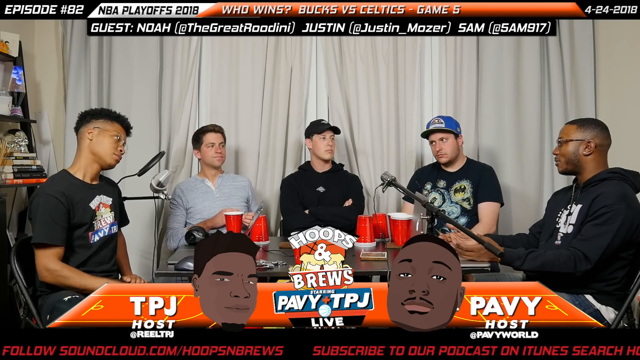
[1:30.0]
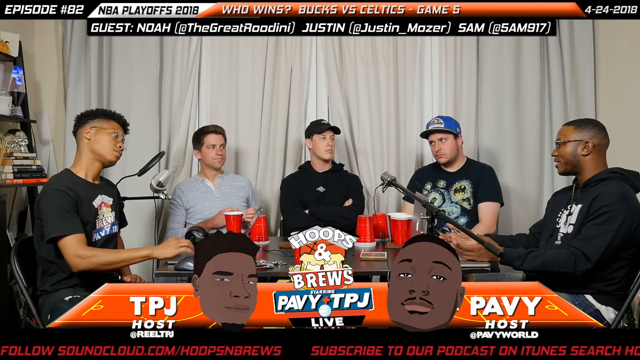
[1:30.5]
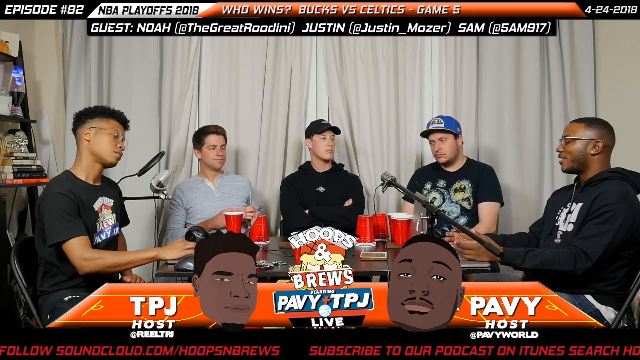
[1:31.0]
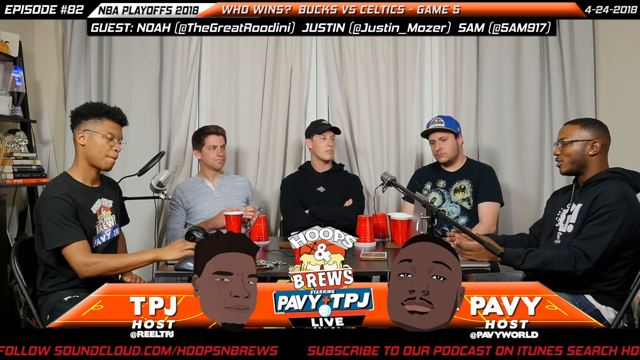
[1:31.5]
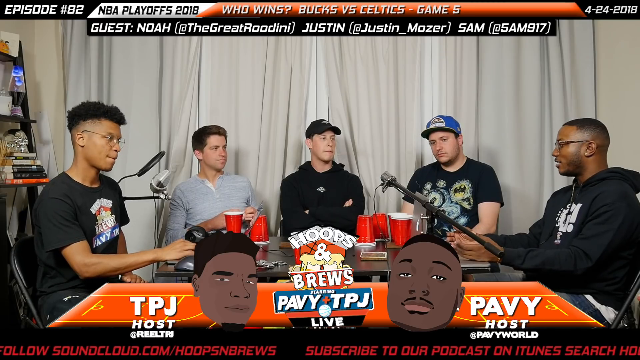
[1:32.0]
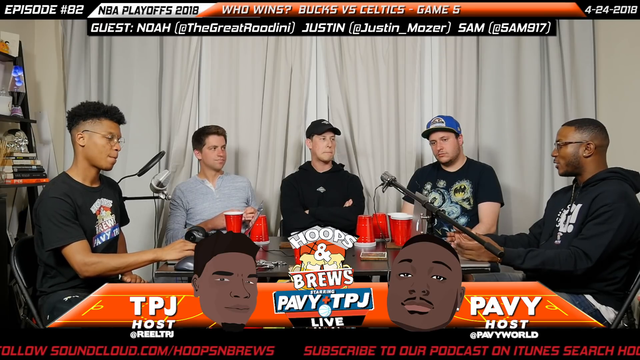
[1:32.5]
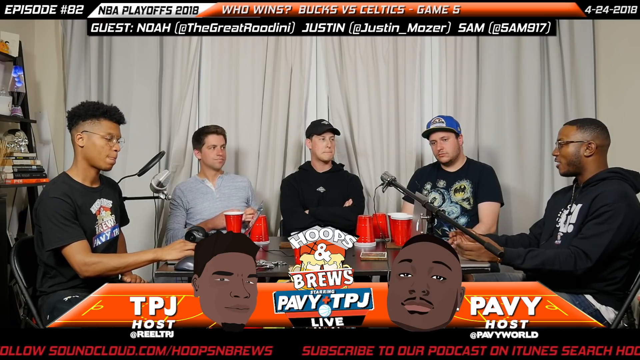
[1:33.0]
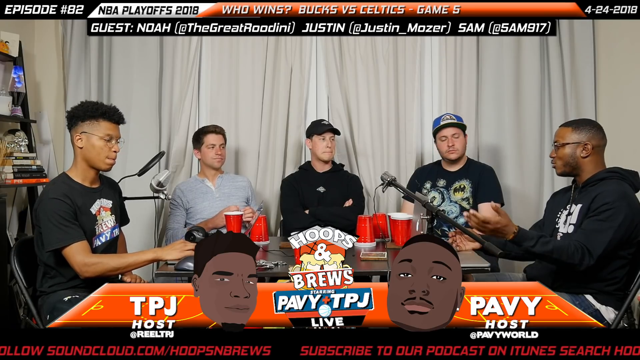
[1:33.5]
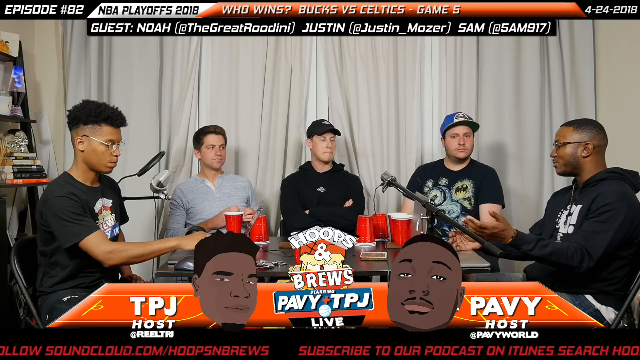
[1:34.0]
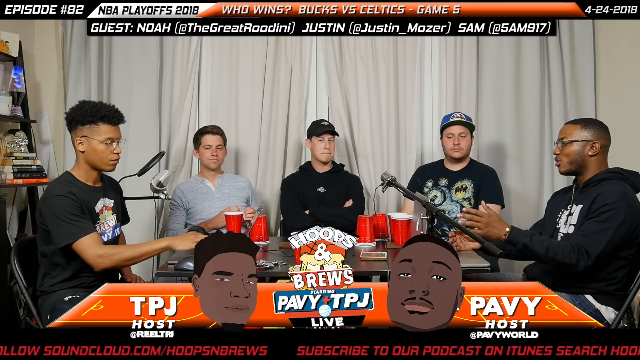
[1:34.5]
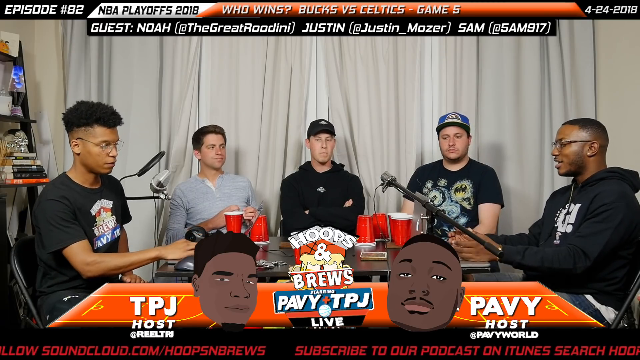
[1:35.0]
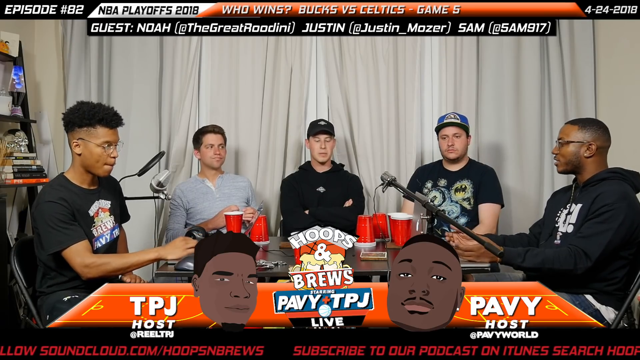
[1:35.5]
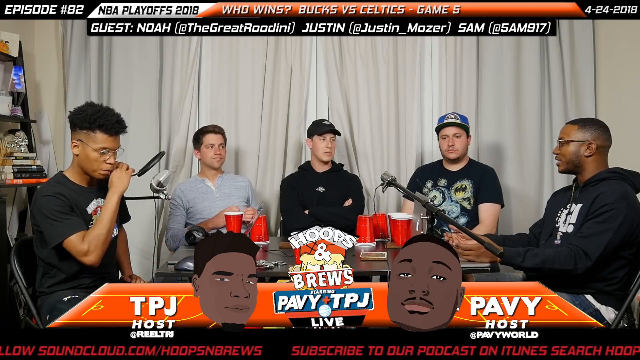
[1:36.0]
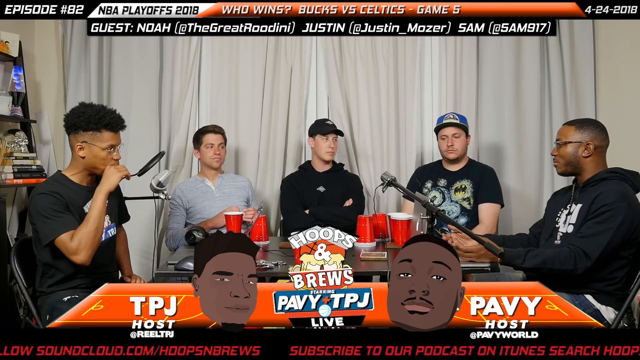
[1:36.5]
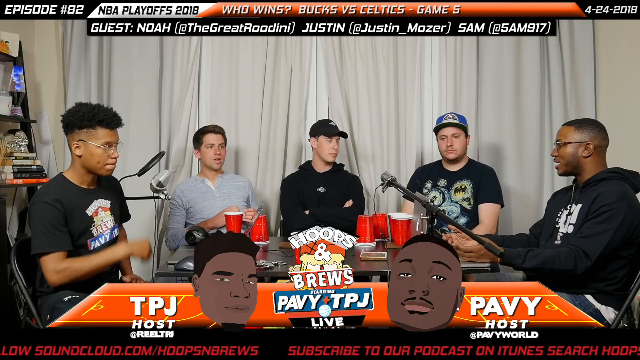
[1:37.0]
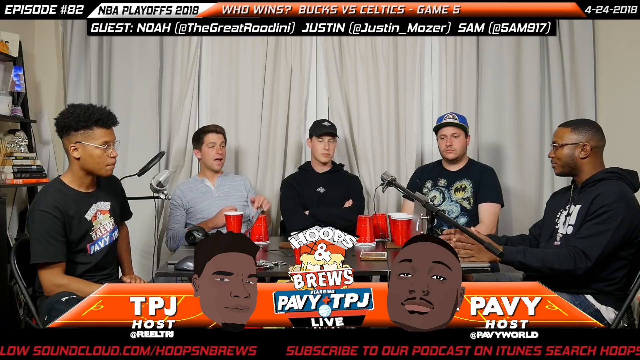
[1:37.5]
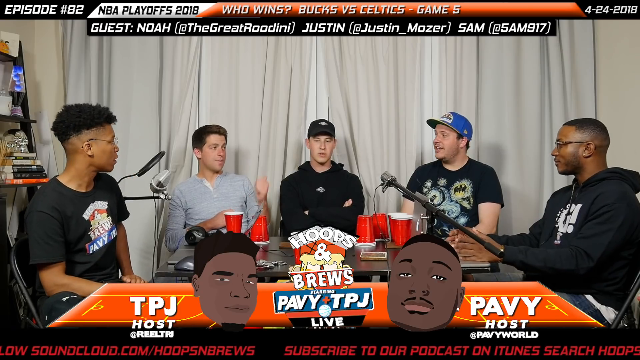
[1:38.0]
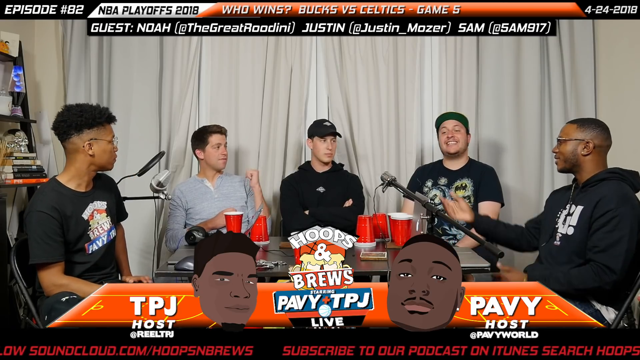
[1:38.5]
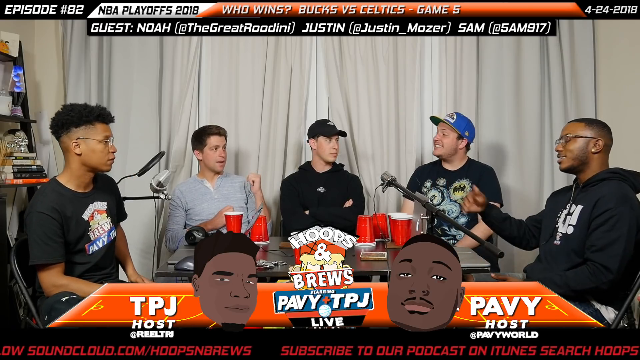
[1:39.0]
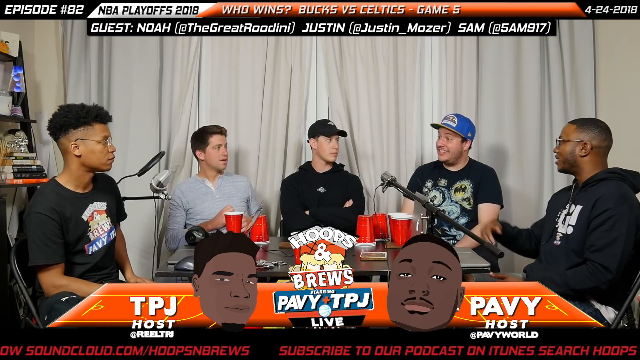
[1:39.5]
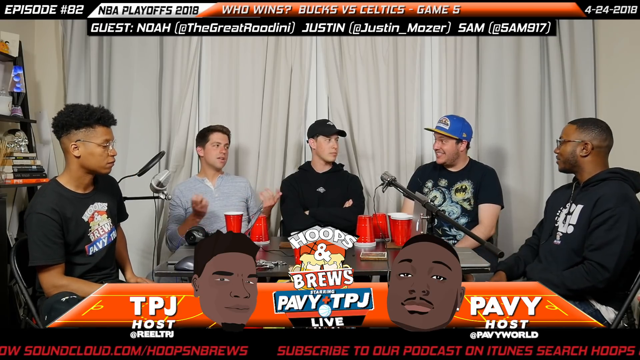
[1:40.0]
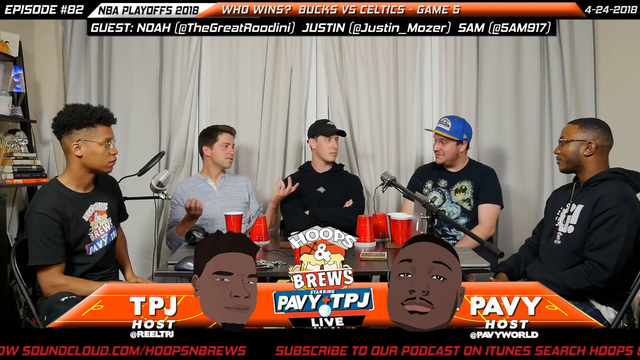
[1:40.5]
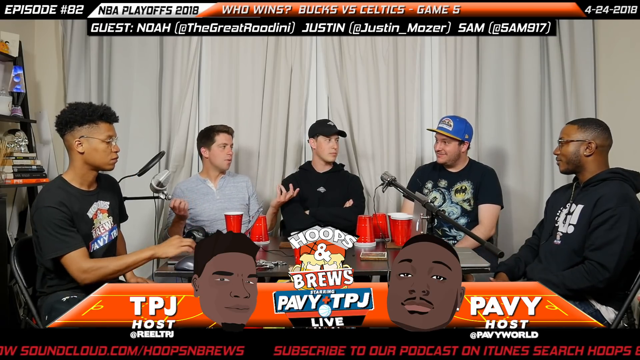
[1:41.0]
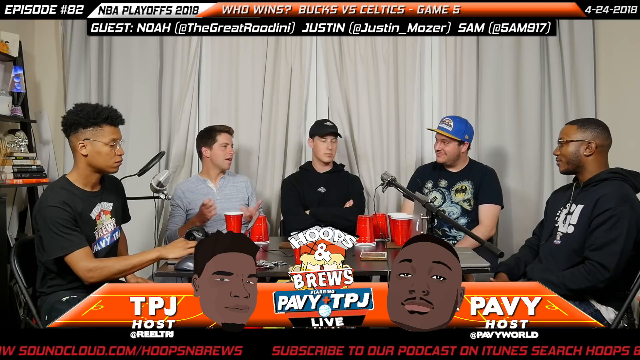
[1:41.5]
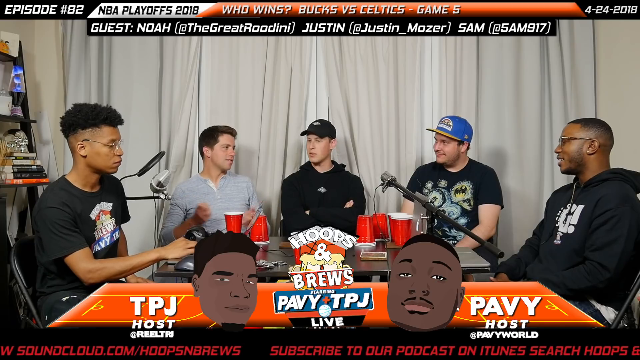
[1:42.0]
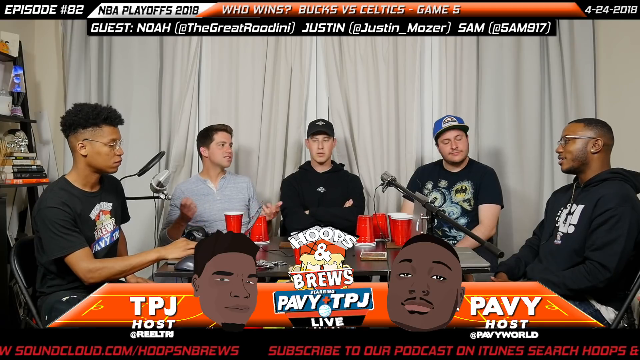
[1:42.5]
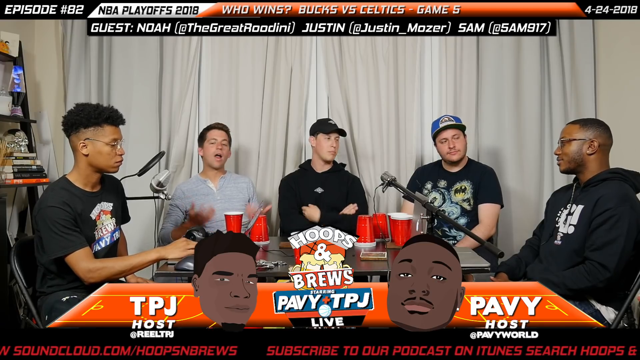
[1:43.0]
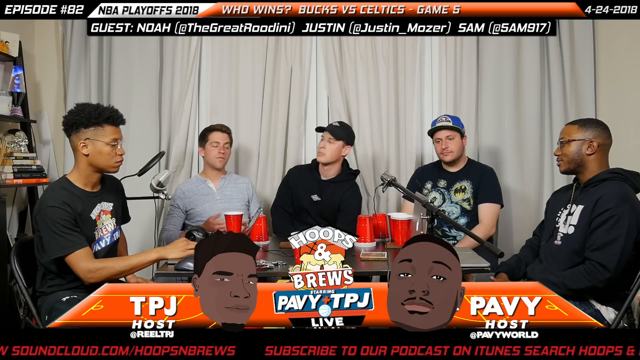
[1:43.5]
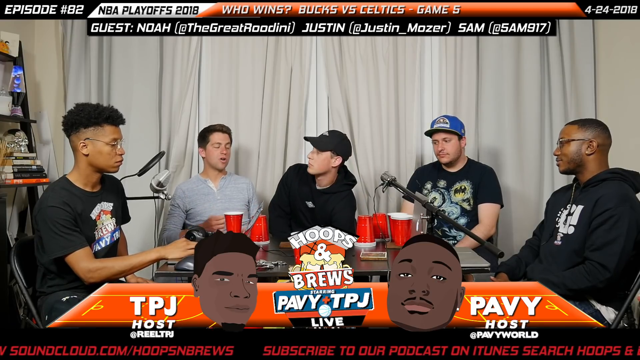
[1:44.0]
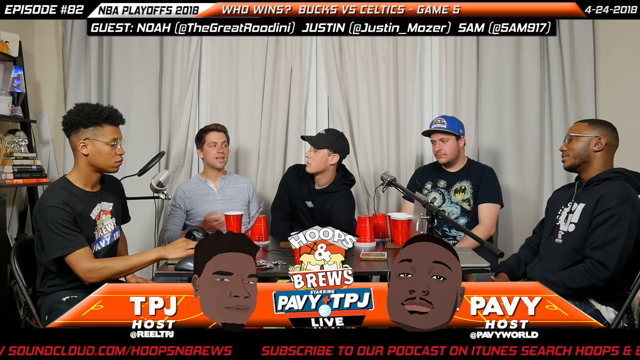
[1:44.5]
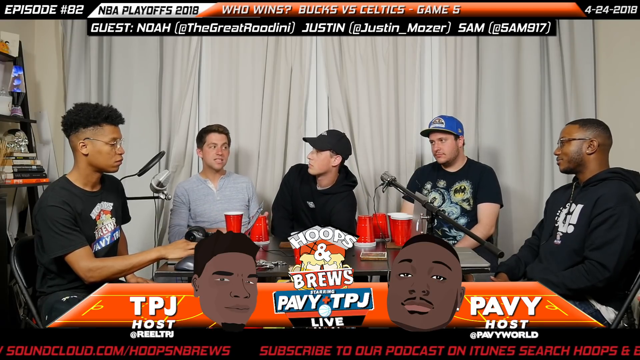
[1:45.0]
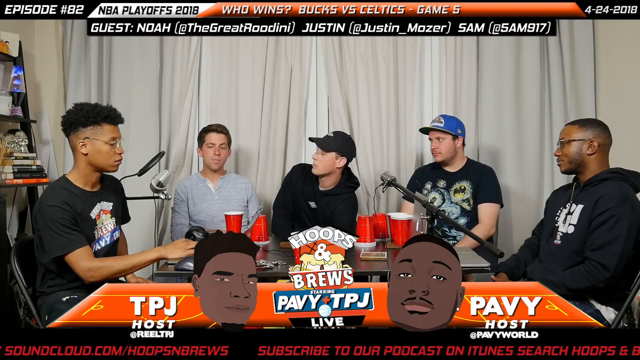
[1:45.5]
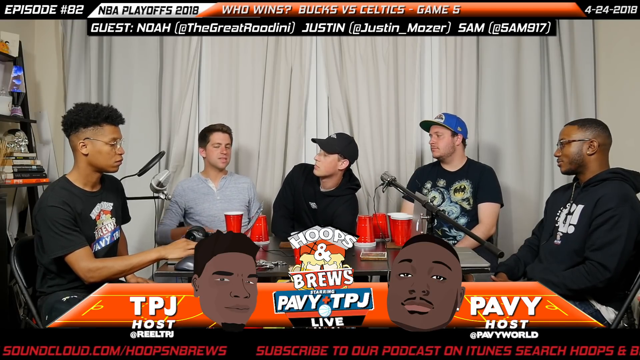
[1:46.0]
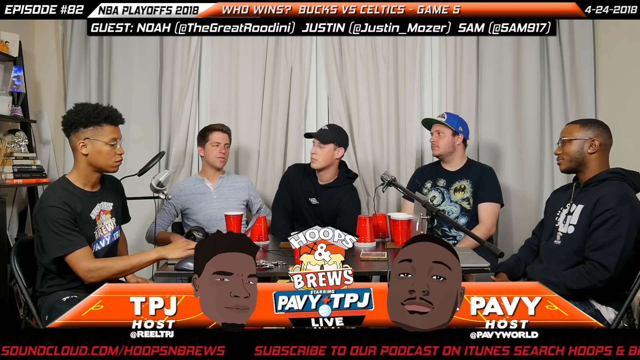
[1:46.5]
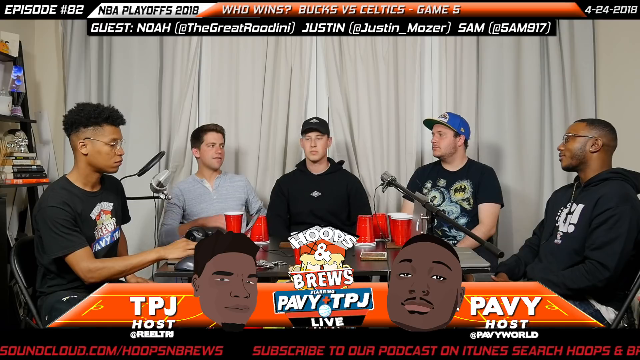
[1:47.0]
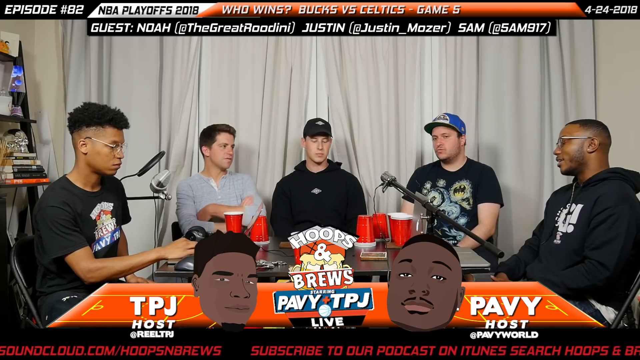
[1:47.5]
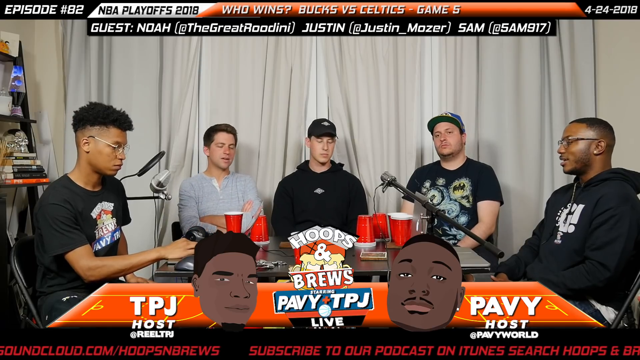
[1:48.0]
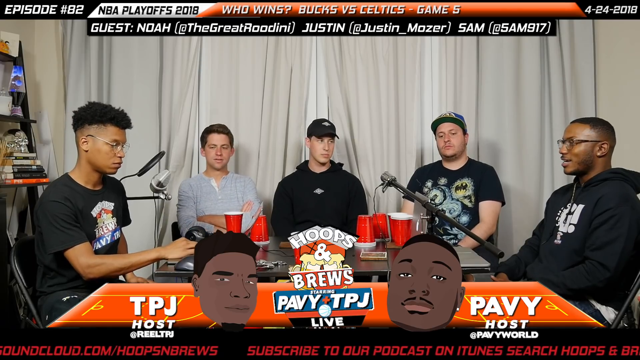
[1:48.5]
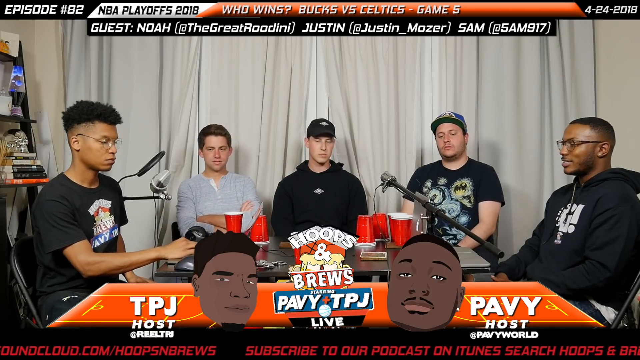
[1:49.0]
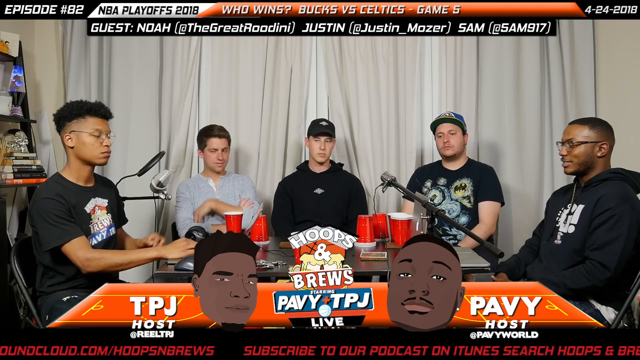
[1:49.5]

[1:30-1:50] The commentators keep talking. Text in the top left section of the screen asks who wins Bucks versus Celtics Game 5, and the top right section shows a 2018 date. A microphone comes into the frame. A Hoops and Brews logo reading "Project Basketball" is in the middle section, and two cartoon images are at the bottom of the screen.